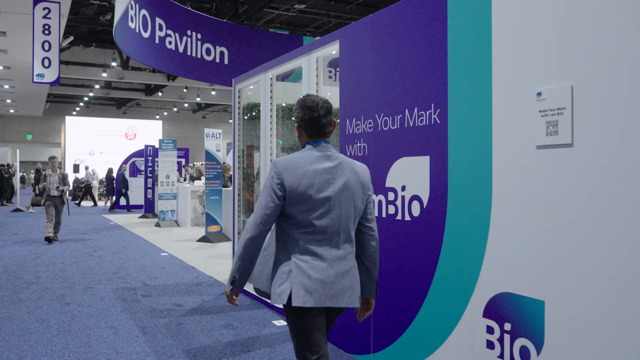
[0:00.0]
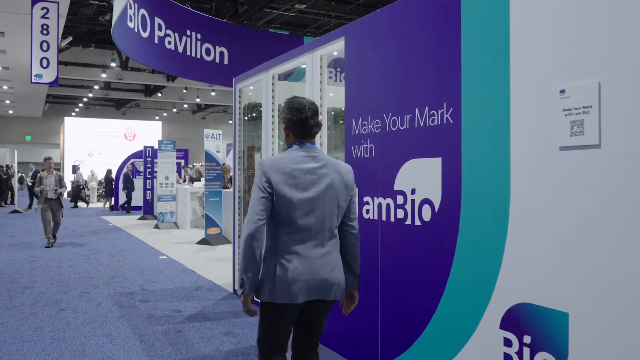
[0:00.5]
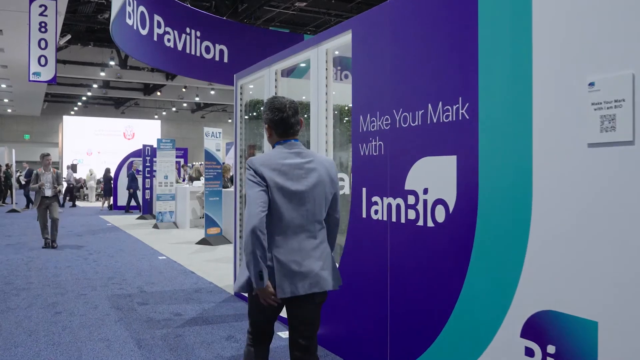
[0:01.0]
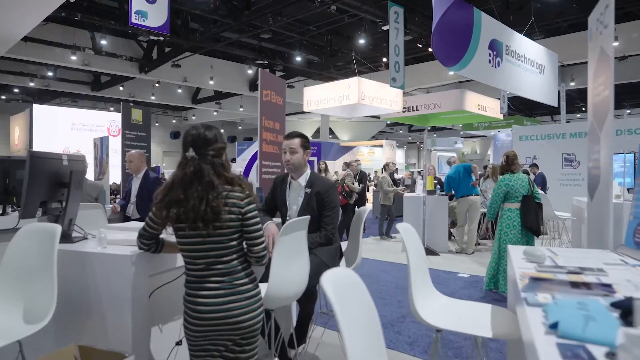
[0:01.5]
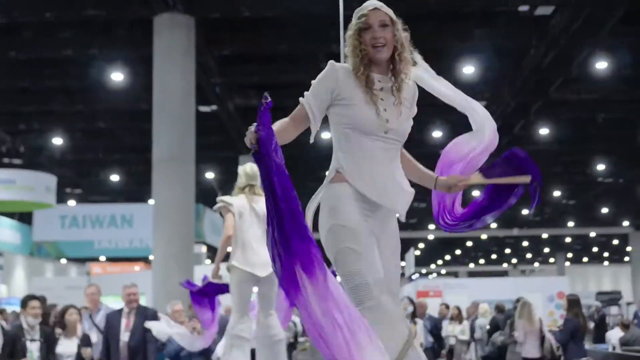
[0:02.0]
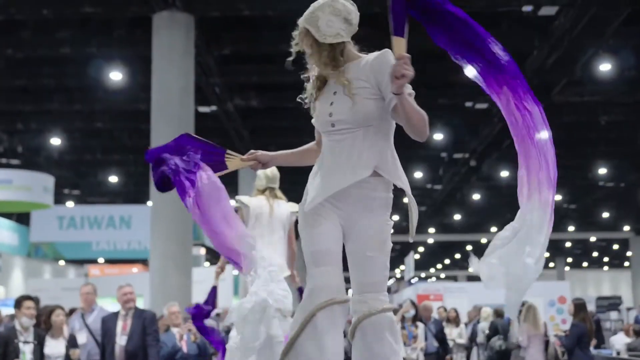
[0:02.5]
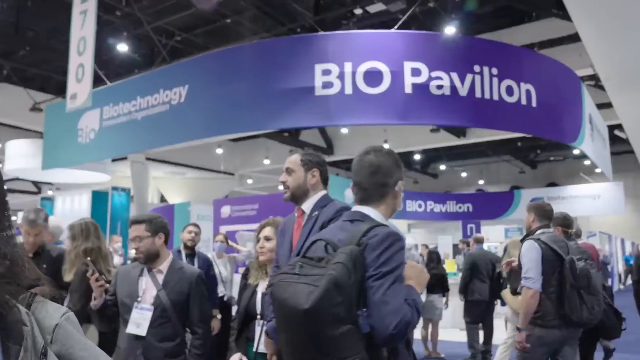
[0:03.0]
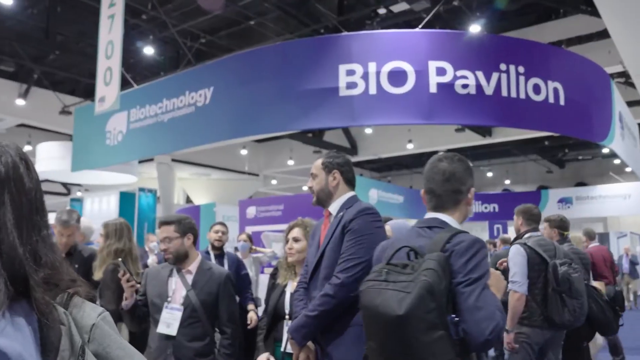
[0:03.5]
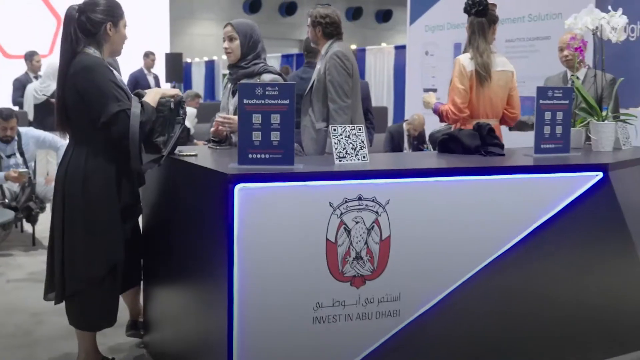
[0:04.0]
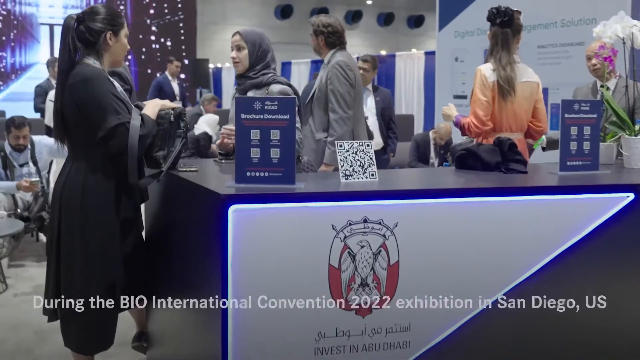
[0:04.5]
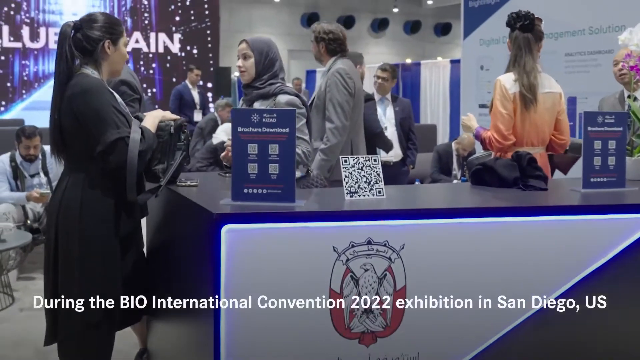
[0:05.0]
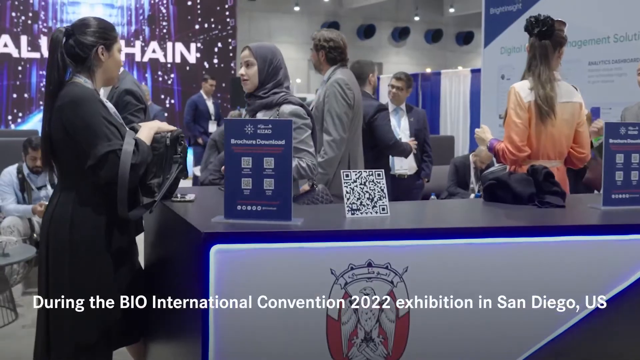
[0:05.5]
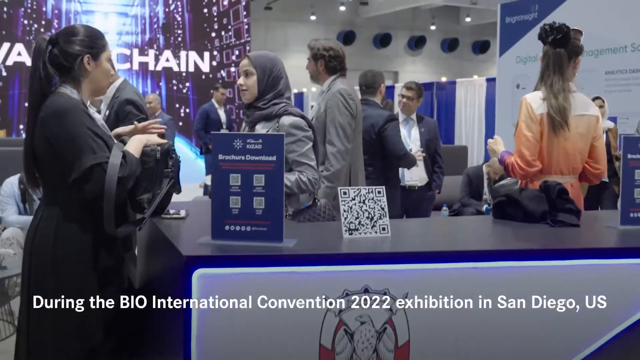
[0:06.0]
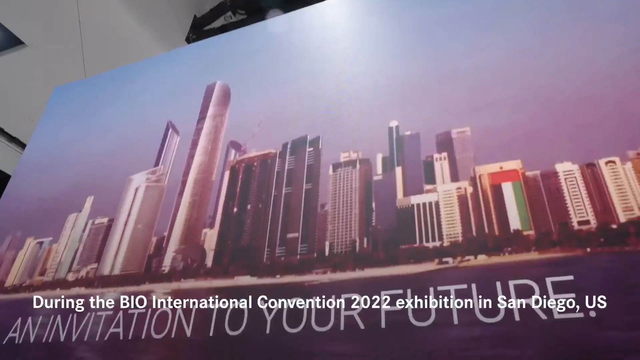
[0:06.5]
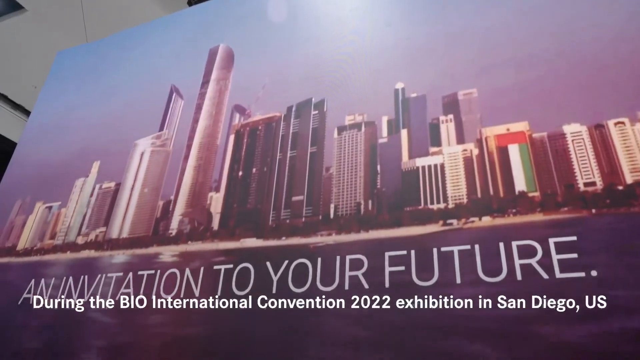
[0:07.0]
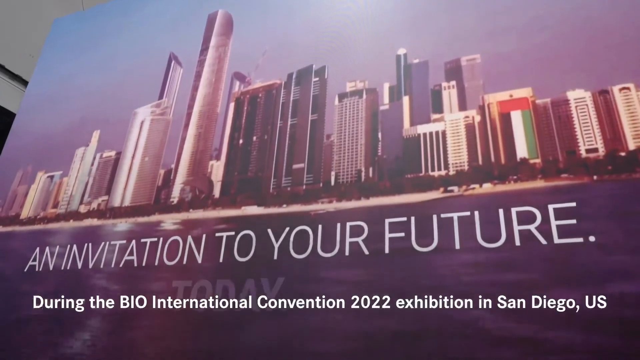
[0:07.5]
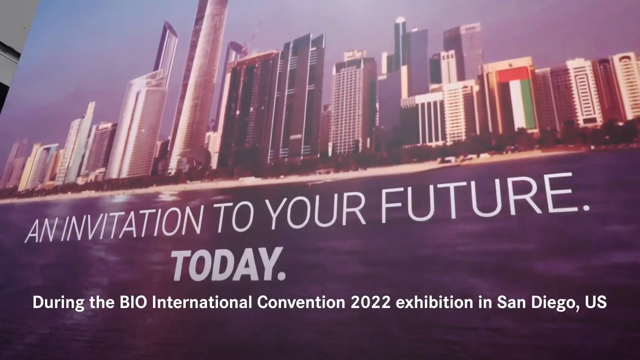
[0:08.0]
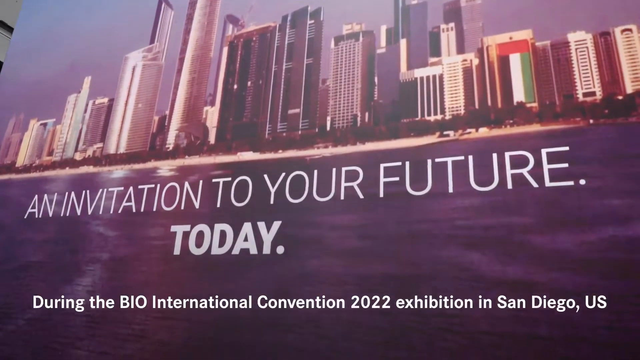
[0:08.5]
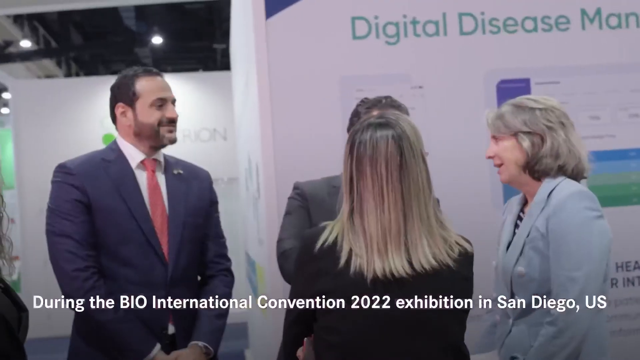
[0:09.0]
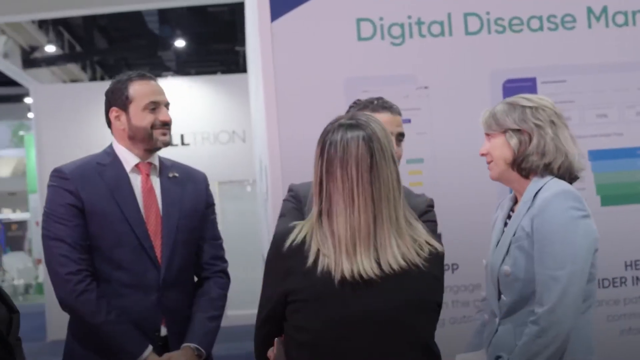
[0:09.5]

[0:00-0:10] A man wearing a suit jacket walks in a large convention hall. The setting appears to be the bio-pavilion, and what appears to be an opening ceremony shows people dancing and holding twirling batons. Another scene shows people standing for a stall at the pavilion, and a large group of people, several of them standing under the bio-pavilion sign. A large banner bears the words "an invitation to your future today." Another scene shows four people, two men and two women, all in business attire, gathered together and facing each other. They make eye contact and smile at each other, and they look like they are discussing something very important that they all want to listen to.